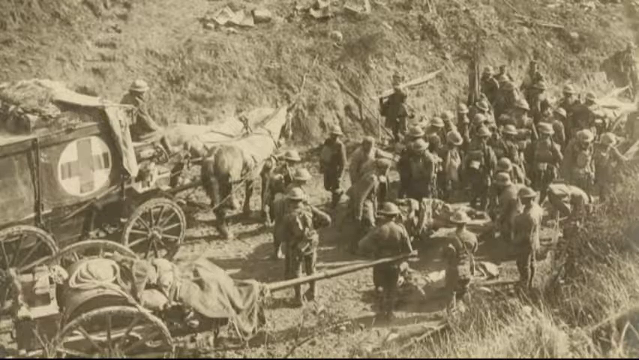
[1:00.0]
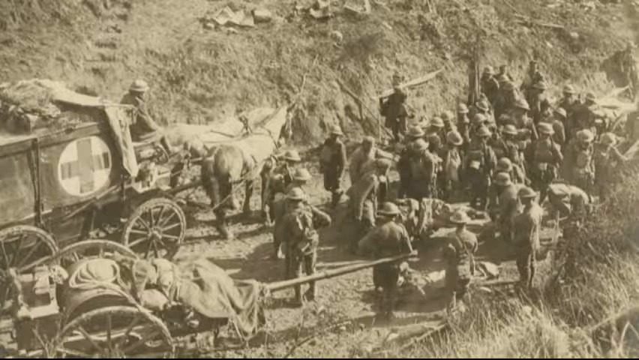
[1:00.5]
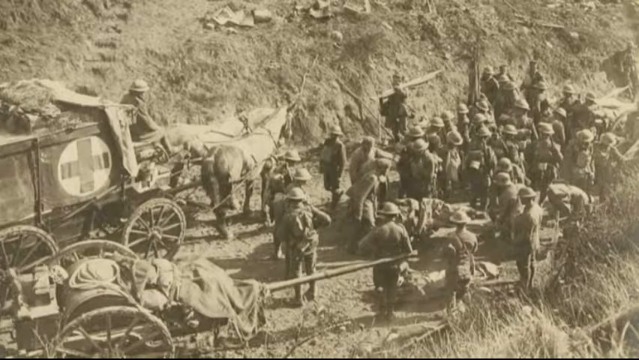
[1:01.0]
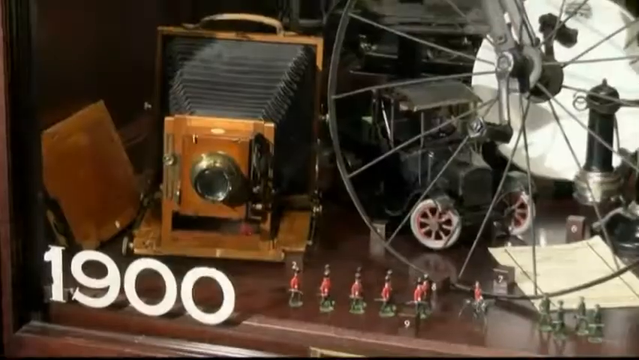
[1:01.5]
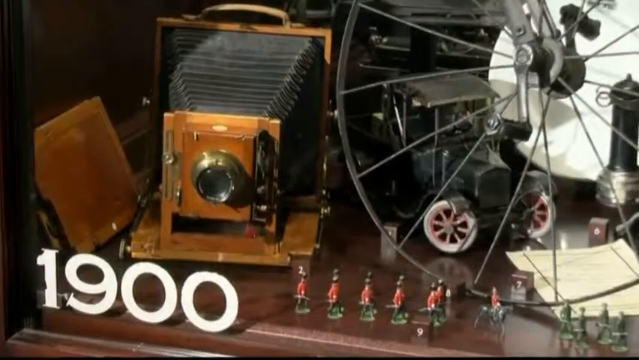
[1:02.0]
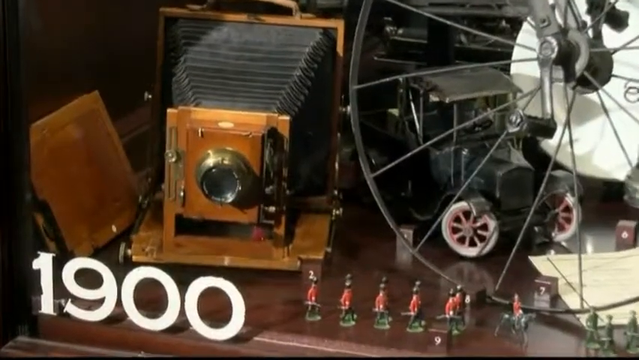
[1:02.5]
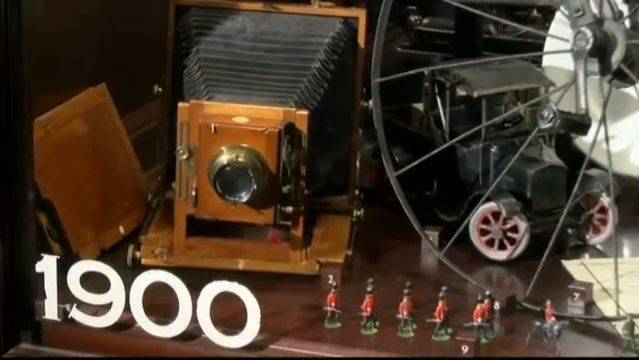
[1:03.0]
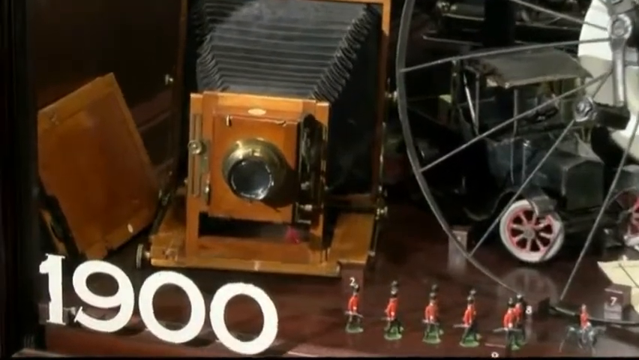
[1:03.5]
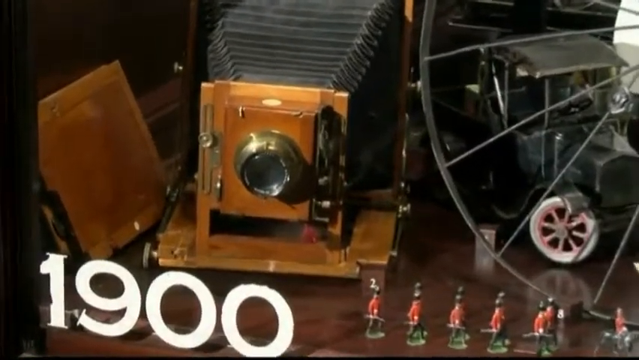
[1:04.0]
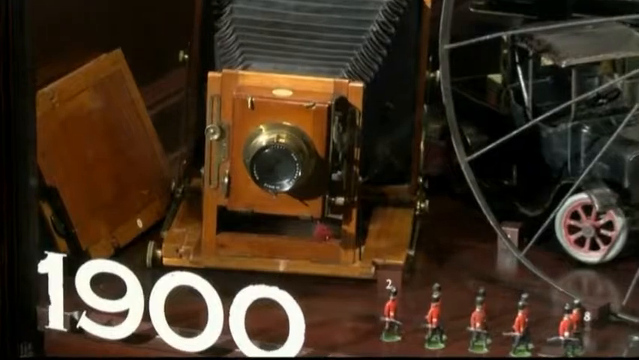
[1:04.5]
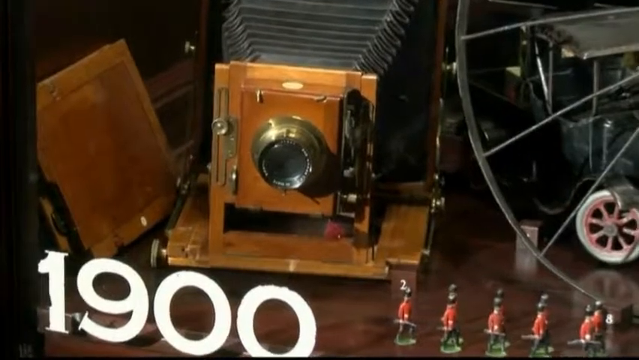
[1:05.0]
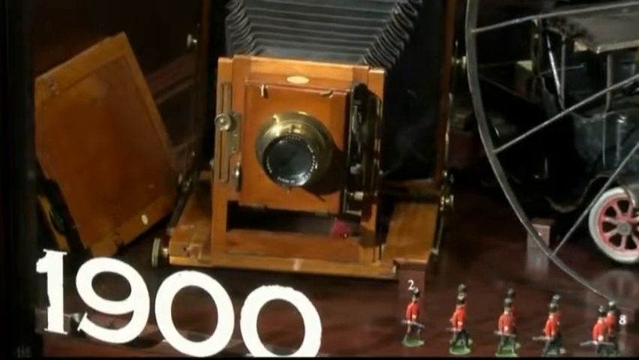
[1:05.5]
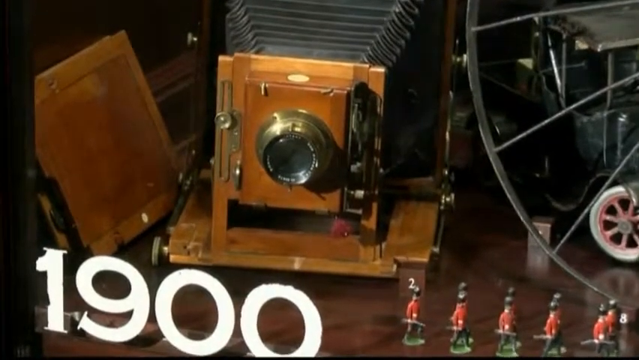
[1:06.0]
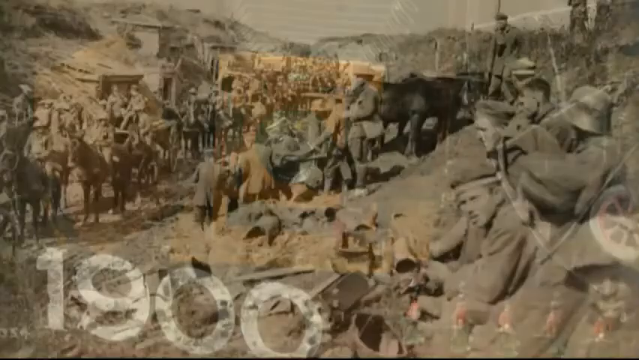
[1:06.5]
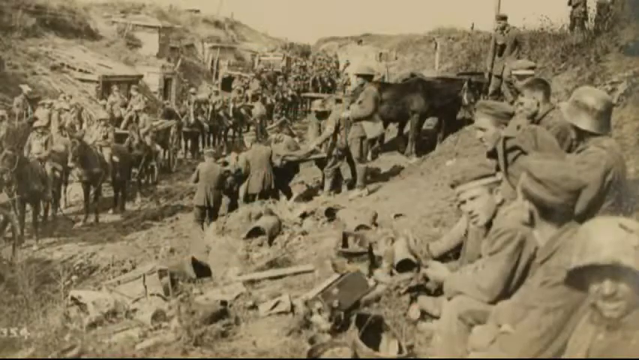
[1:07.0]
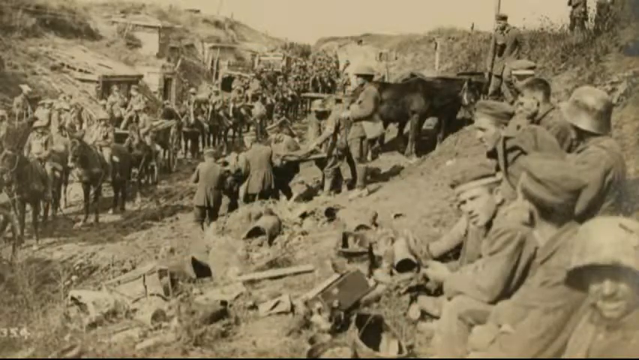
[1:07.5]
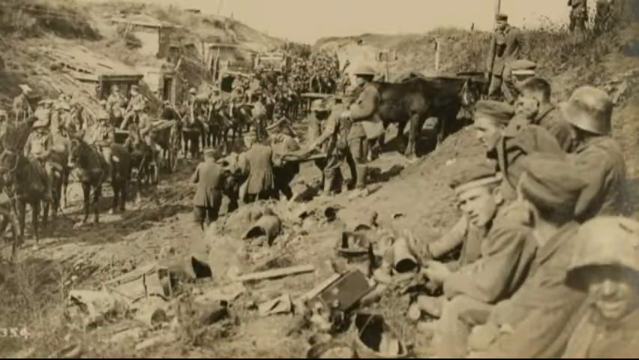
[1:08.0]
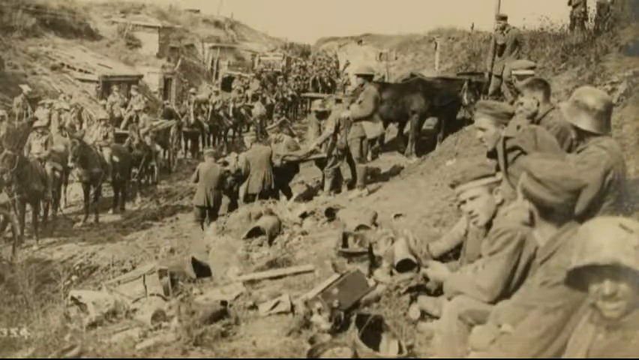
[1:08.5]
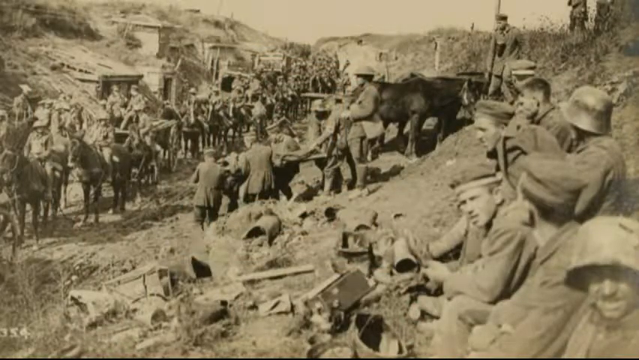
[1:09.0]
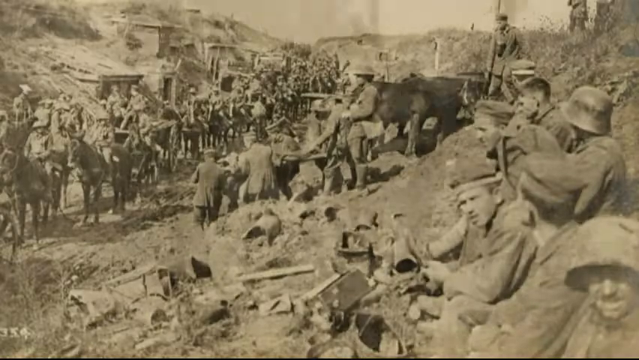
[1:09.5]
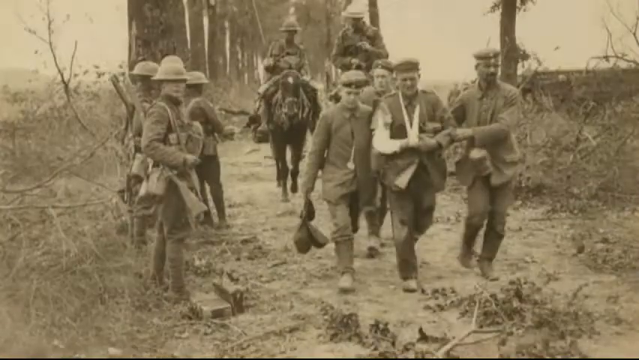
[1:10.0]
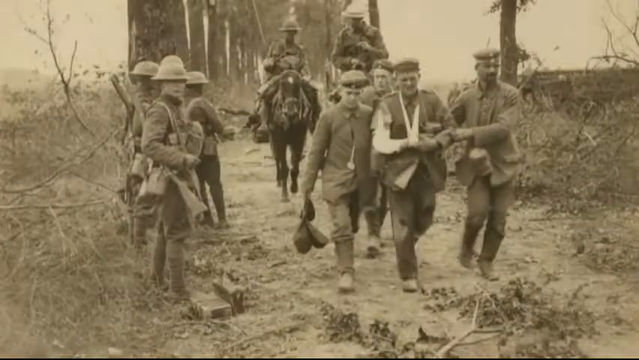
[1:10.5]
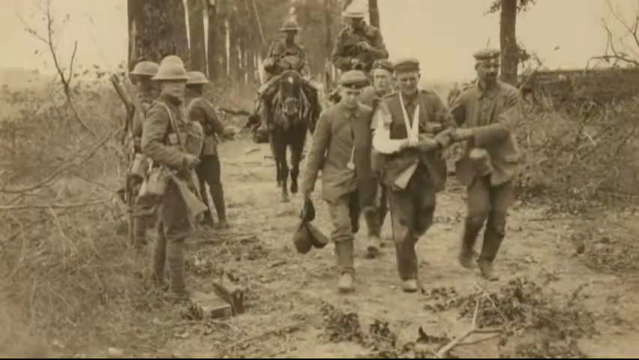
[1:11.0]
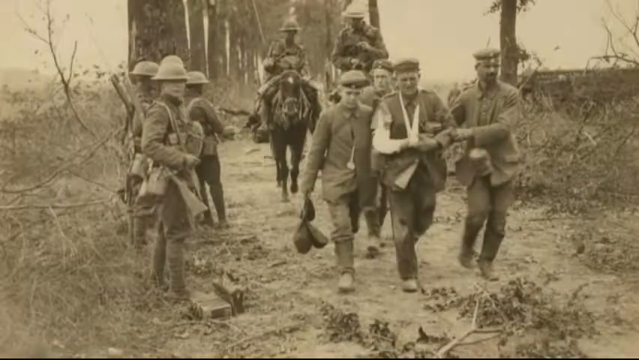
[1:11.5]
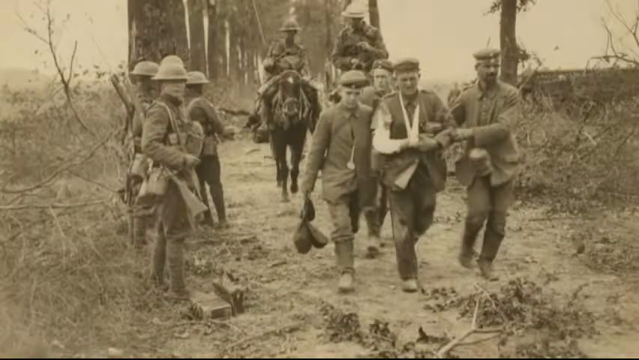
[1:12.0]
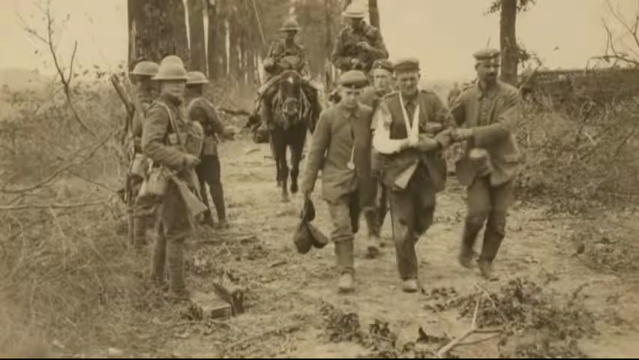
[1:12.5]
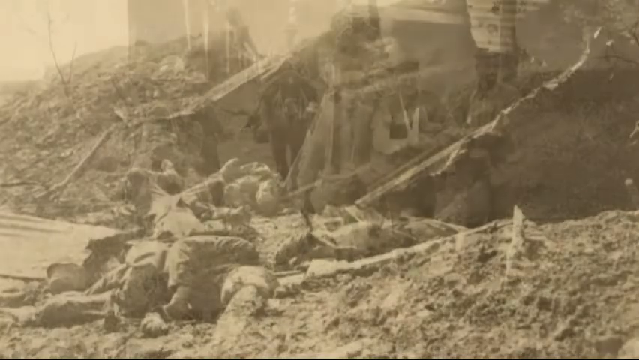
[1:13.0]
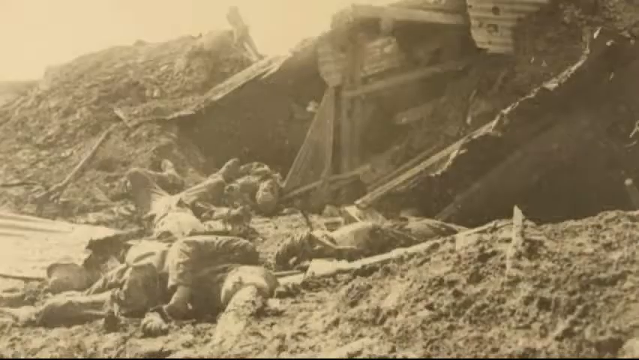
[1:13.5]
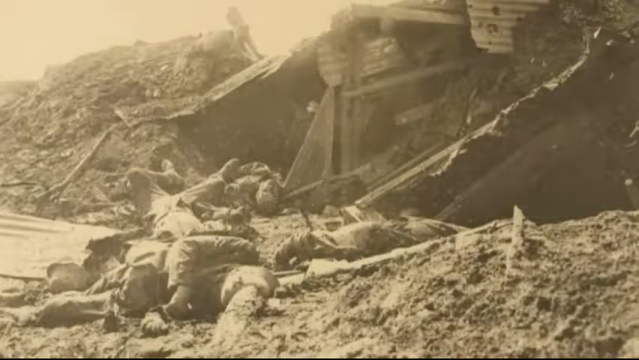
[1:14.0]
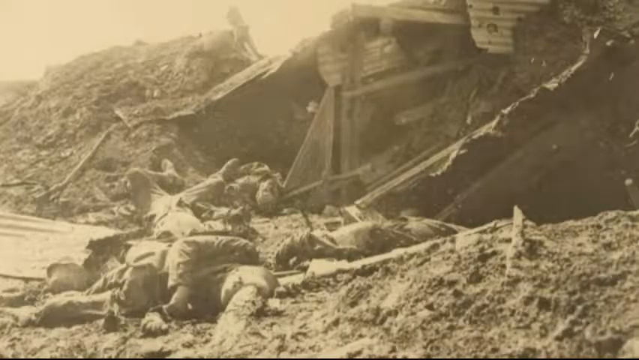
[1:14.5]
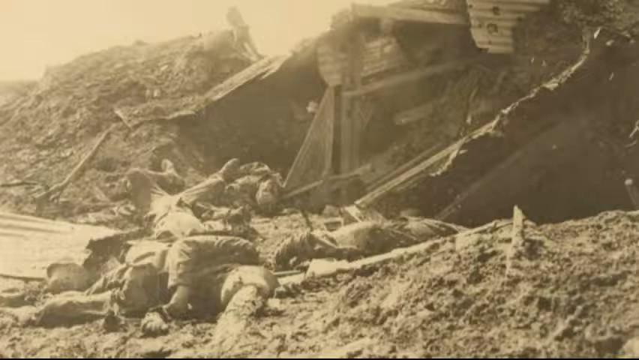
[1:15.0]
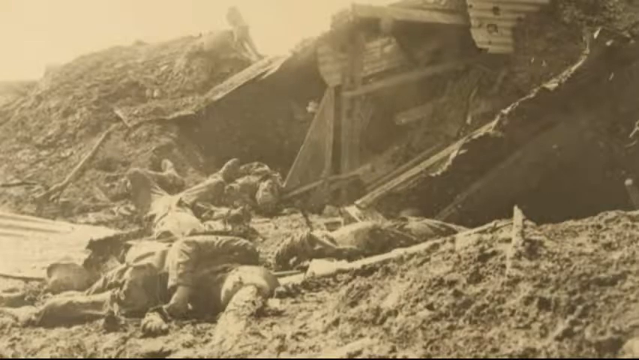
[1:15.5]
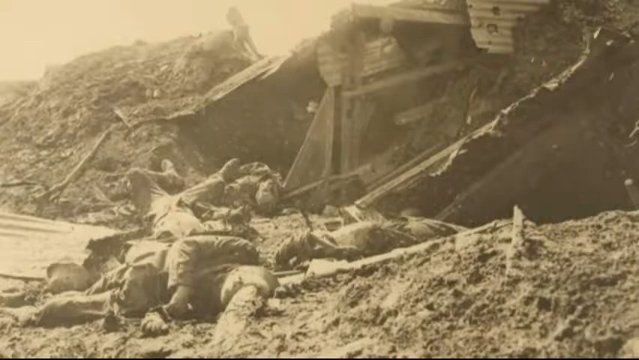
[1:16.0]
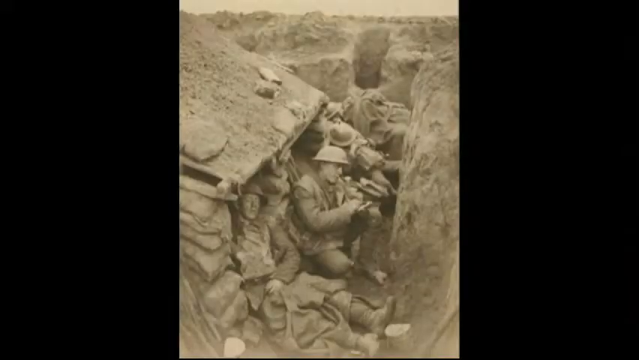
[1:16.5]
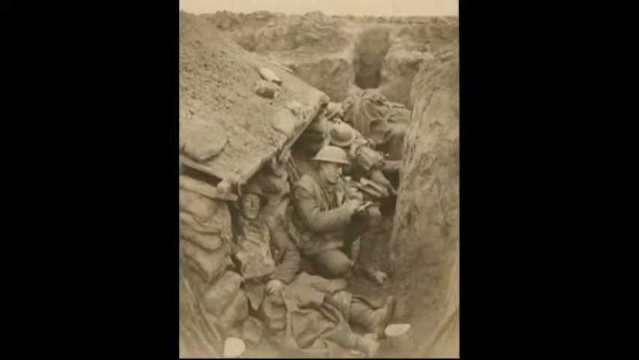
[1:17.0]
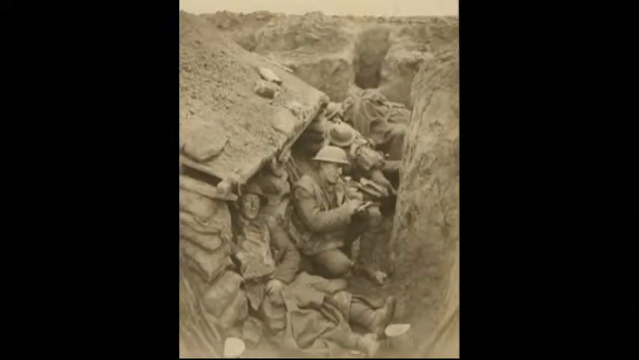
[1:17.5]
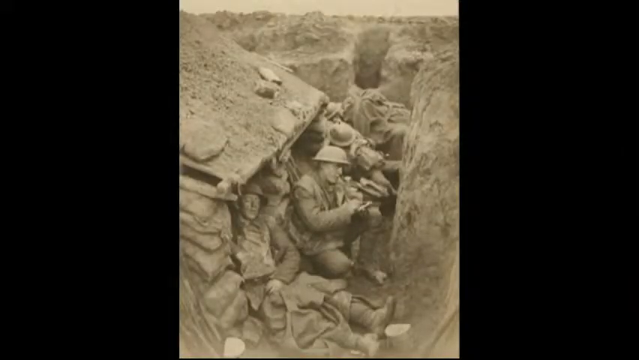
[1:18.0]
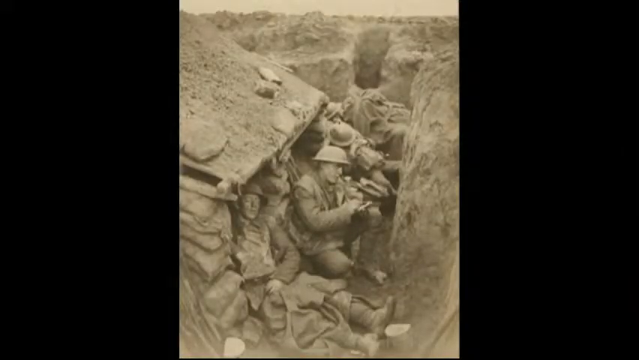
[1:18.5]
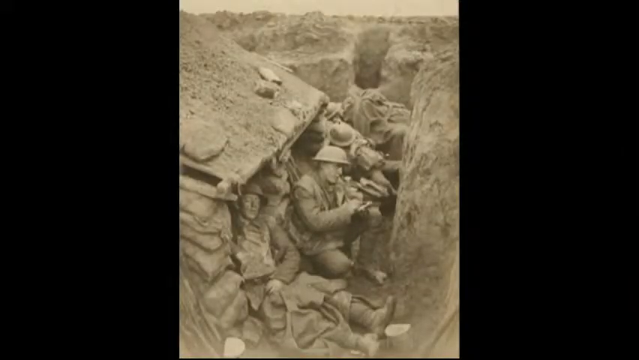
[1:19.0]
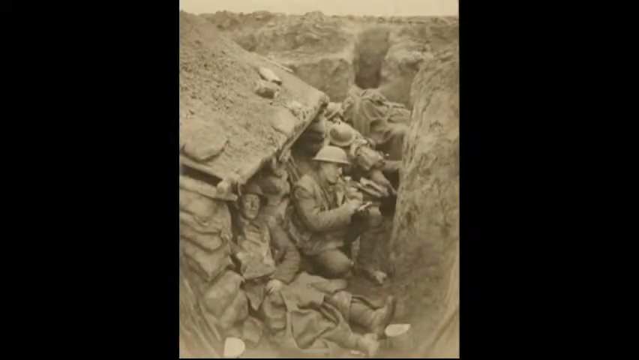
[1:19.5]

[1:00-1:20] A black-and-white picture shows a wooden wagon with a plus sign on its side, a person sitting at the front of it, and three horses in front pulling the wagon. In front of the wagon, a group of soldiers stands in military uniforms and helmets, surrounded by nothing but dirt. The video cuts to a color shot of a very old camera on a table, with a bicycle wheel to the right, and "1900" written in white in front of the camera. It then cuts to a black-and-white picture of dirt ground with a long line of soldiers in buggies and on horses, and soldiers sitting on the dirt on both sides of them.